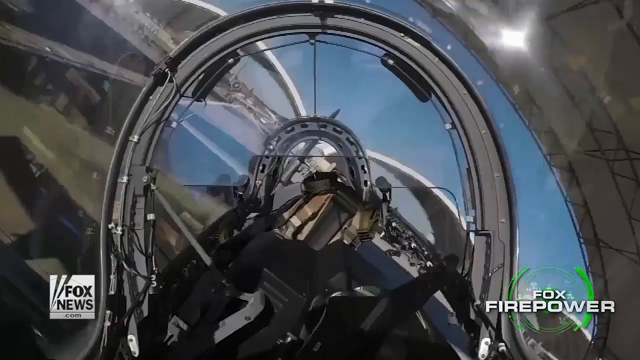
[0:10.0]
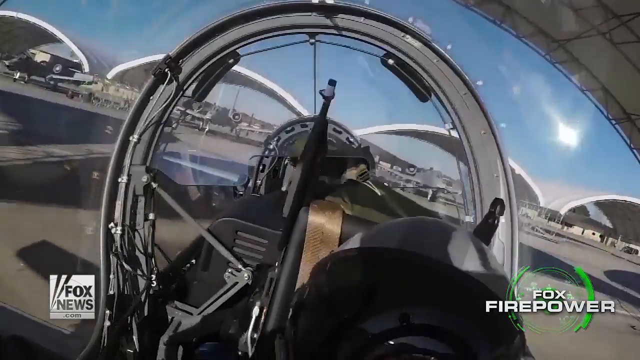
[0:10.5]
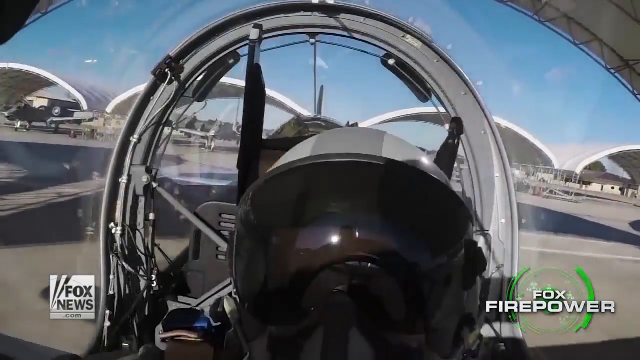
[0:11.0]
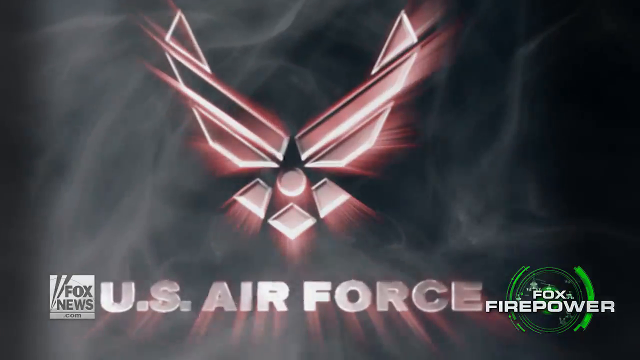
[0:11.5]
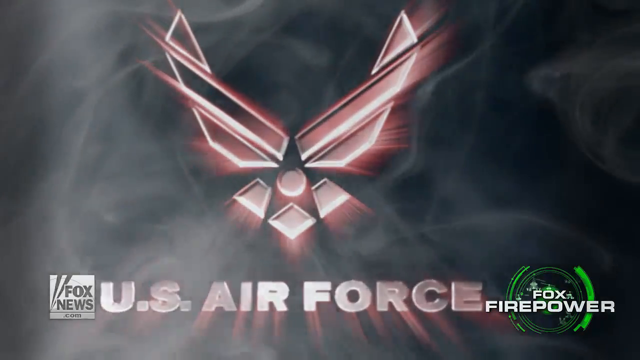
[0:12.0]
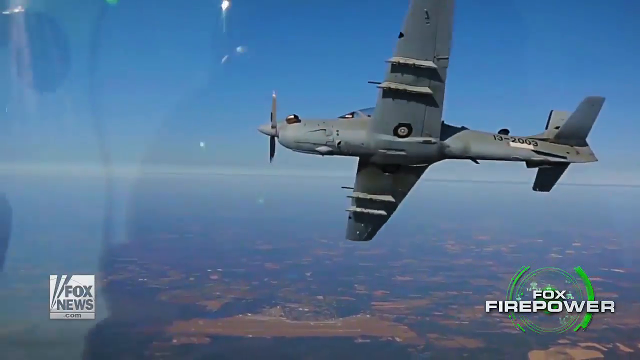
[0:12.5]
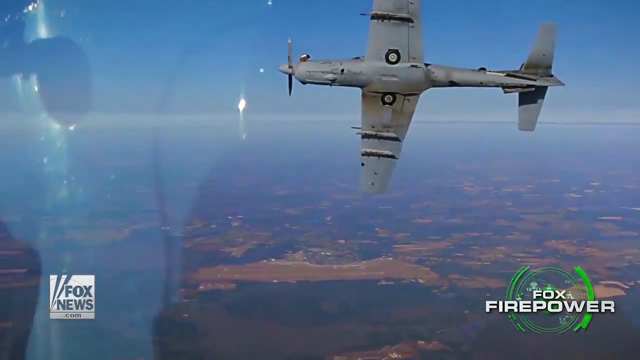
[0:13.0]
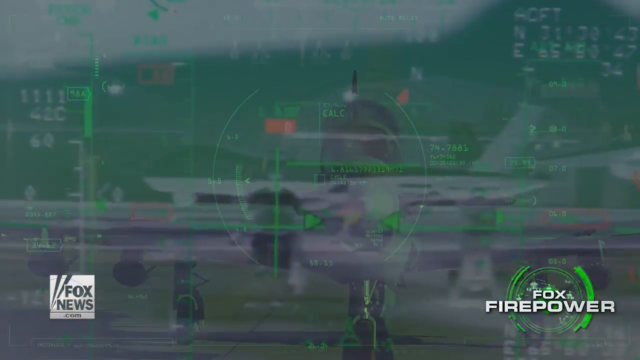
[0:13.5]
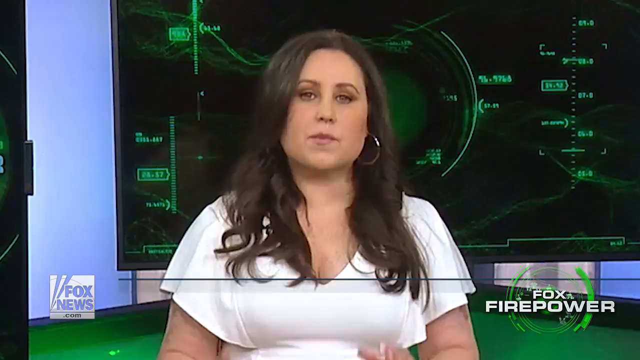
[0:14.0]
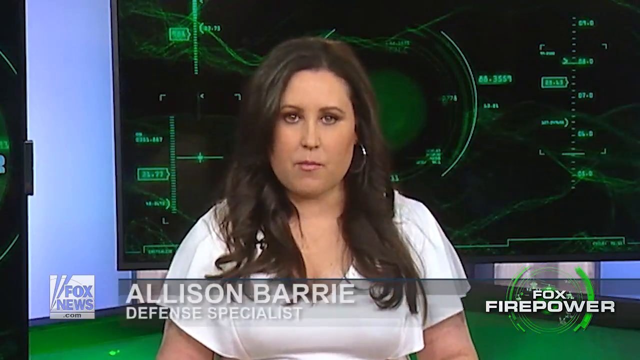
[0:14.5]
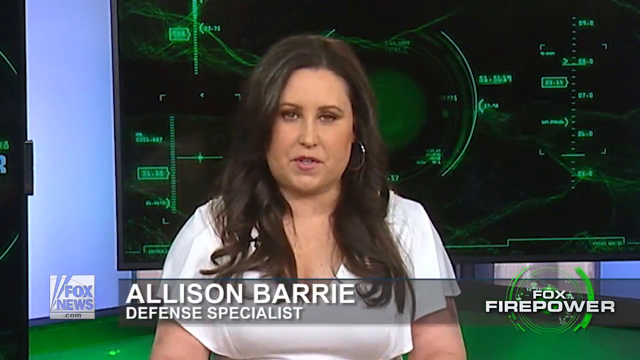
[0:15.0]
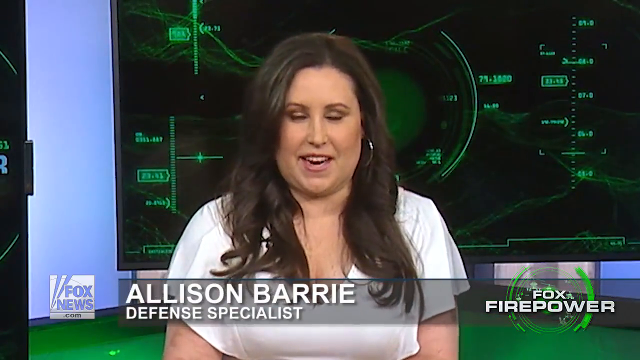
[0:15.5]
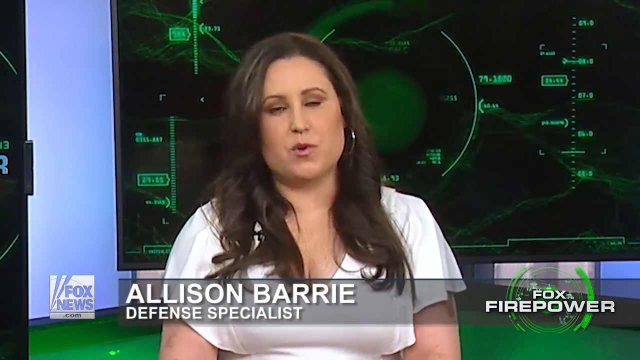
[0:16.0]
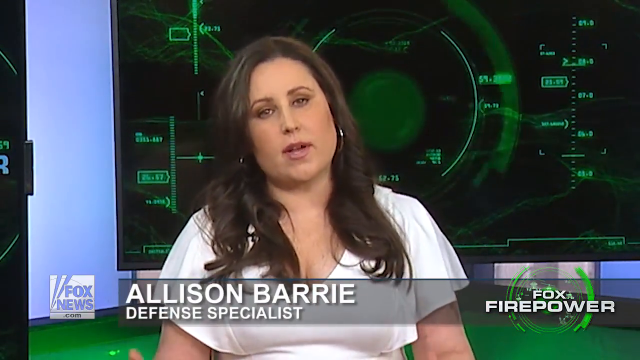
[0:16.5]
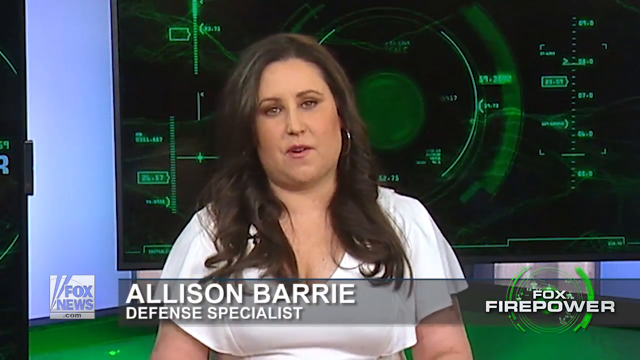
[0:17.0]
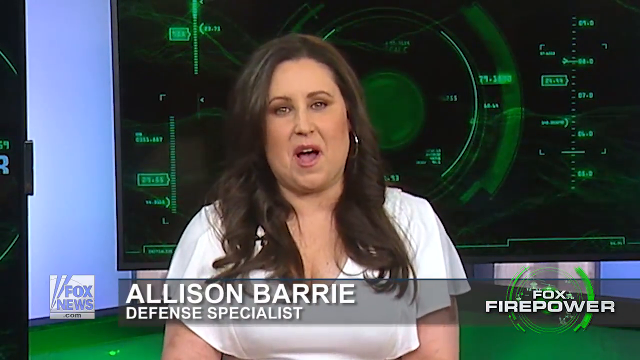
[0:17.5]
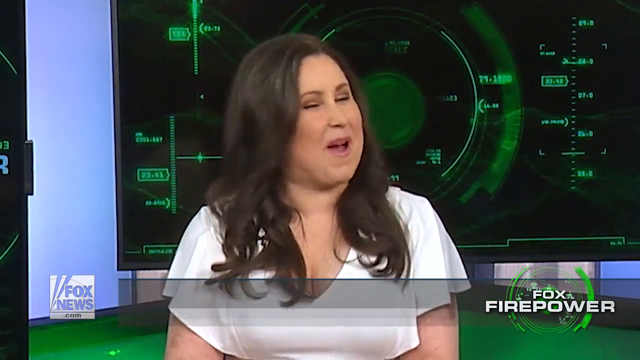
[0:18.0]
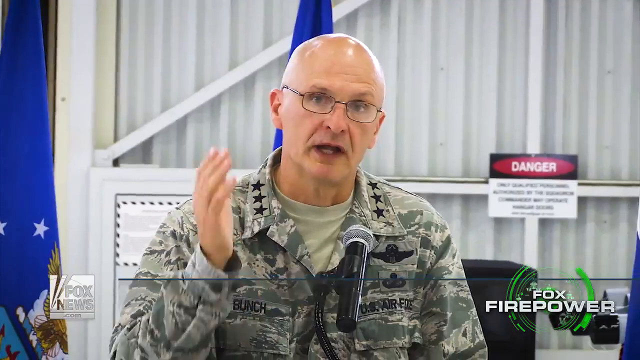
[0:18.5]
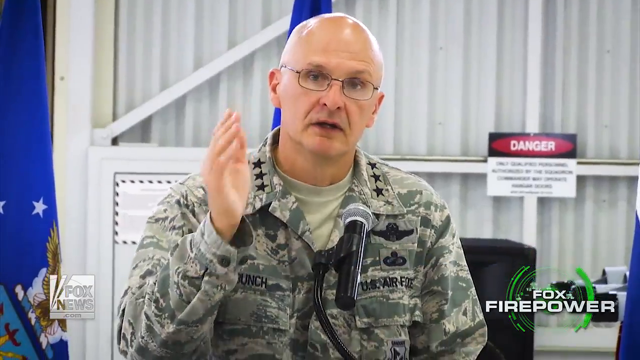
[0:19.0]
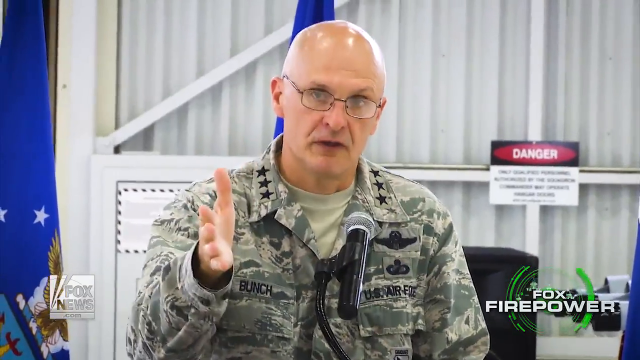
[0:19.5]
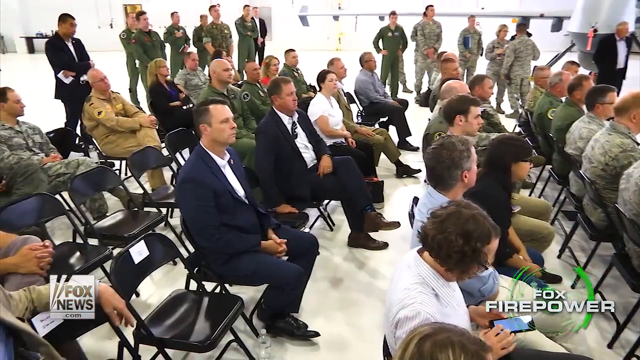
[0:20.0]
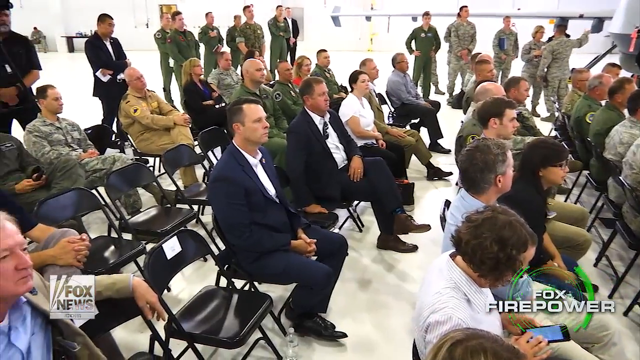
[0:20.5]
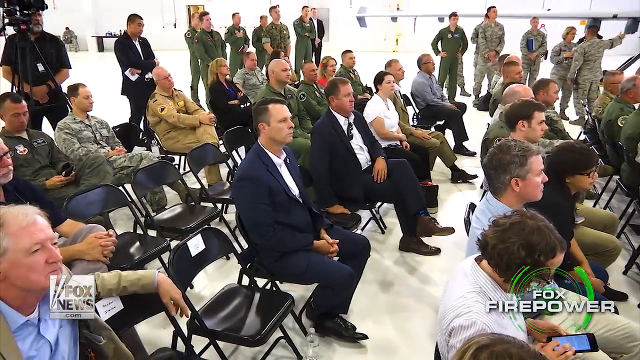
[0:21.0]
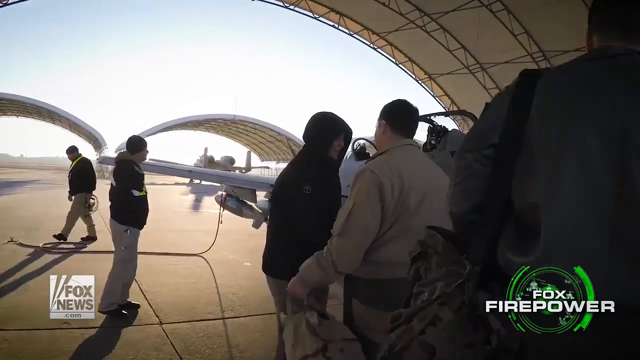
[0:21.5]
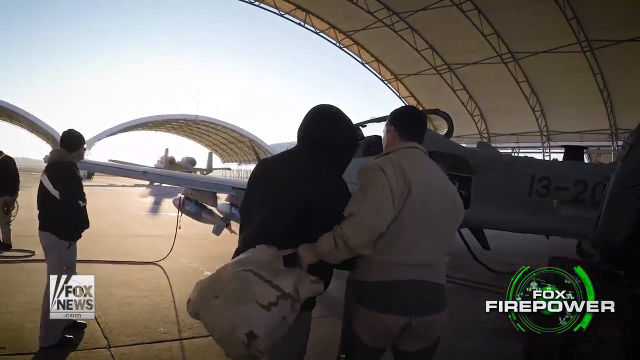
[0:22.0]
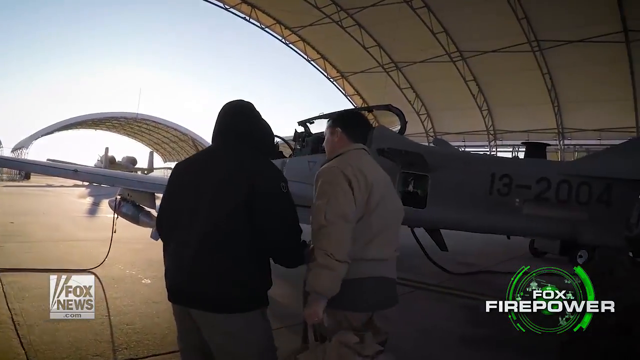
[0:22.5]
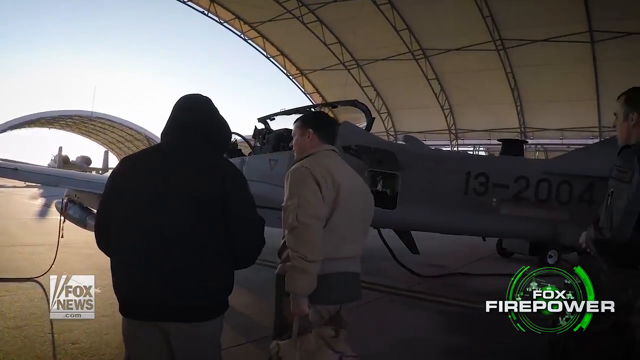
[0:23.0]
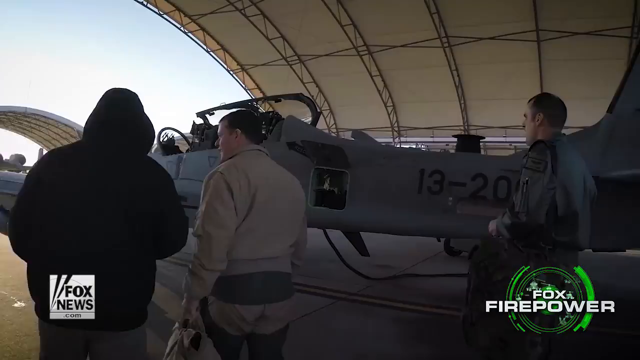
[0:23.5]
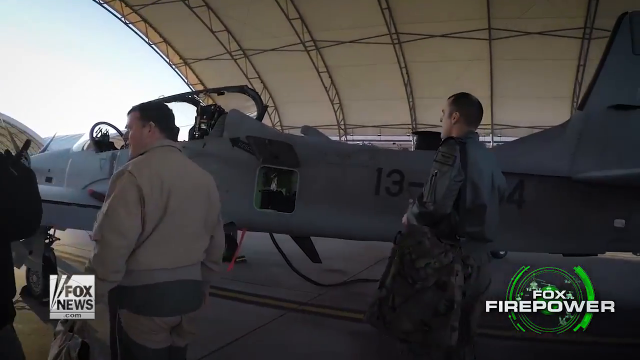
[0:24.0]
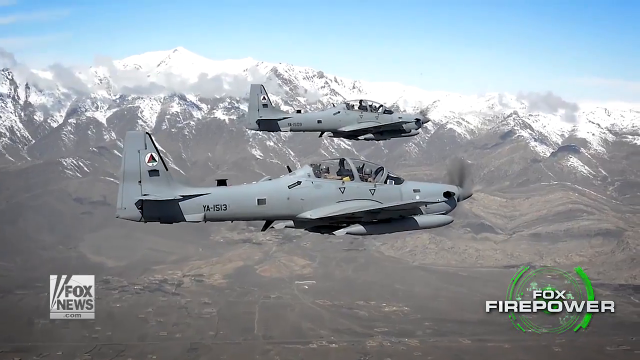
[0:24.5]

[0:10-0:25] A game is being played, then several air force scenes follow. The scene moves to a woman talking, then to a white man, then to what looks like a conference room where someone is addressing a group. They are all seated, many of them in army uniforms, and they are having a conversation together. The reporter is named Allison, a defense specialist. Two planes fly, and the pilots are visible through the plane. A couple of people walk toward something, and "us air force" appears on screen at some point. The reporter is a white woman with brown hair who looks very smiley and energetic; she wears loop earrings and a white t-shirt and is talking, giving a rundown of what is happening. The view then moves to a military man in army uniform addressing people in a hall.